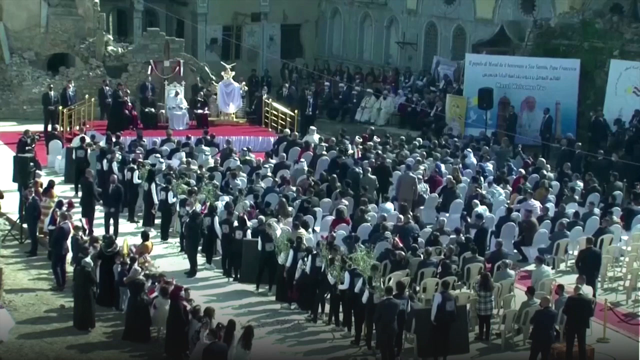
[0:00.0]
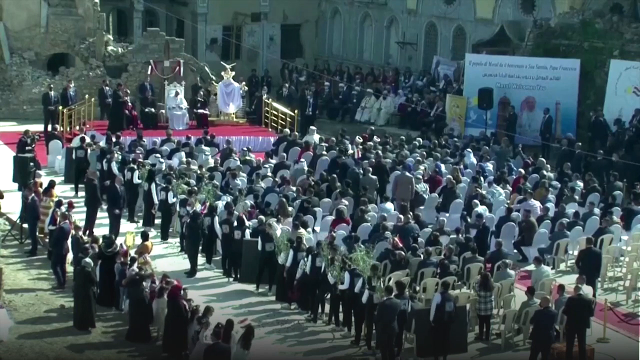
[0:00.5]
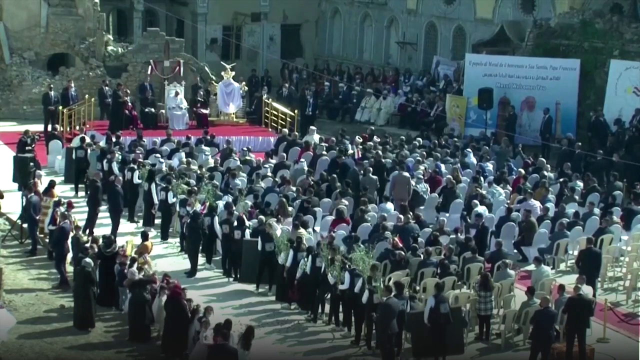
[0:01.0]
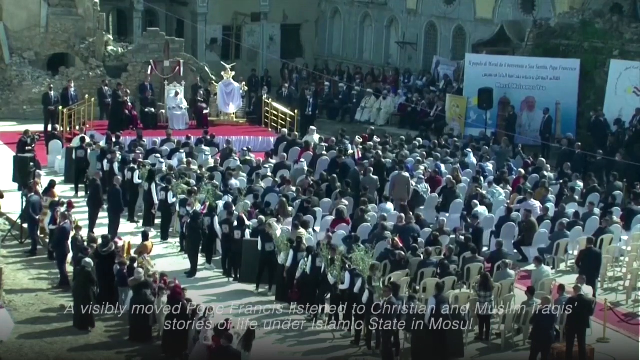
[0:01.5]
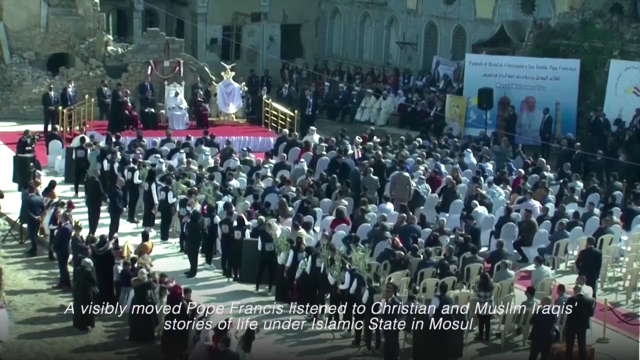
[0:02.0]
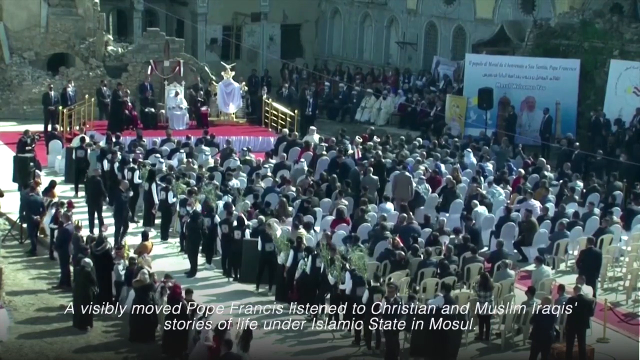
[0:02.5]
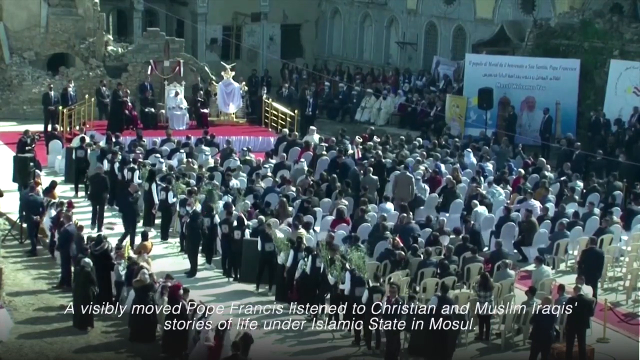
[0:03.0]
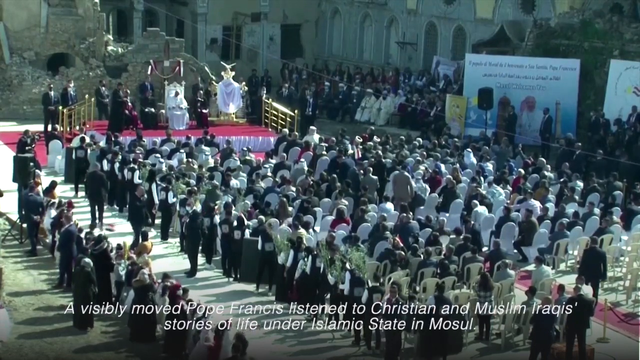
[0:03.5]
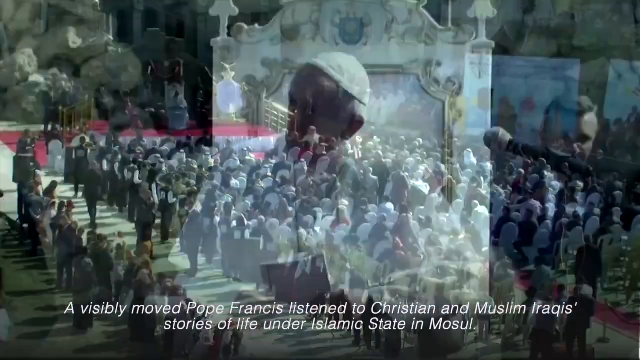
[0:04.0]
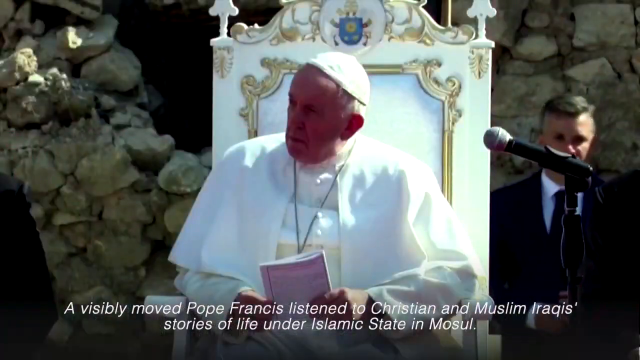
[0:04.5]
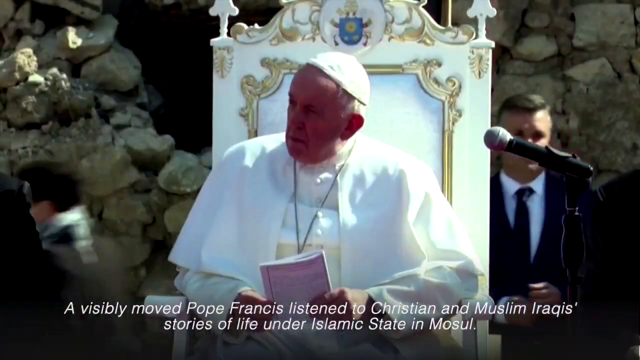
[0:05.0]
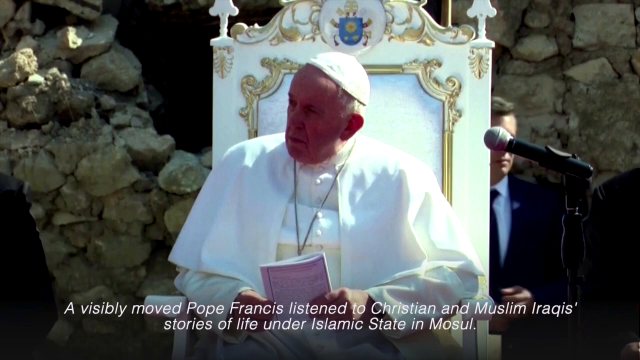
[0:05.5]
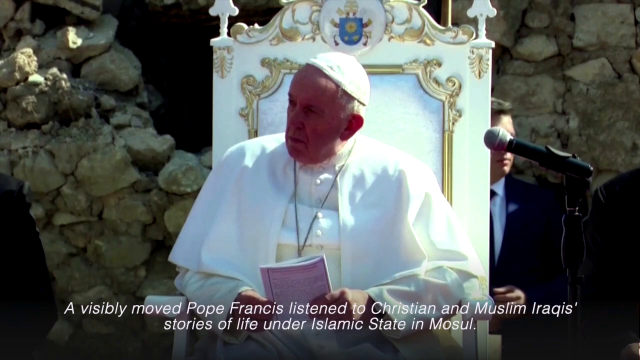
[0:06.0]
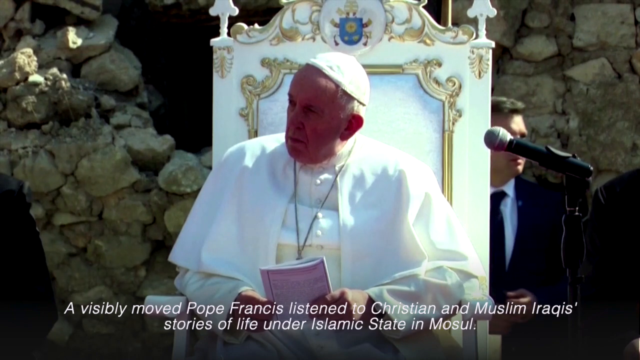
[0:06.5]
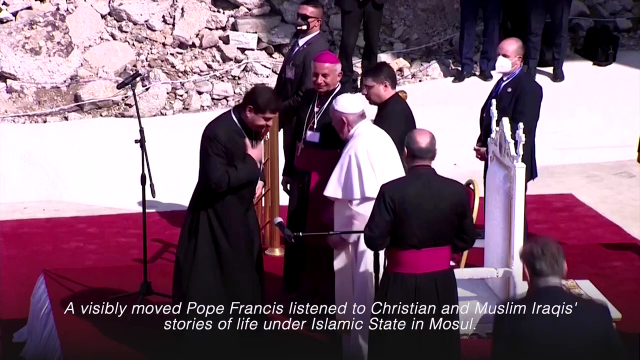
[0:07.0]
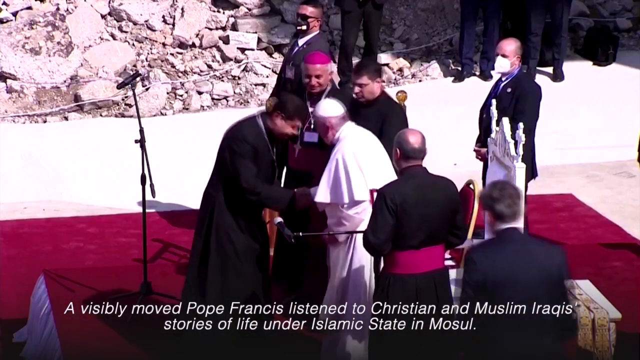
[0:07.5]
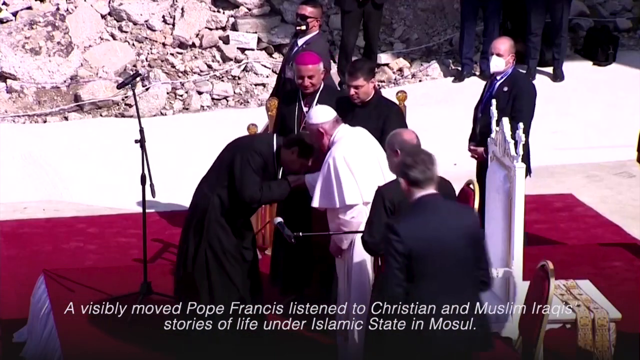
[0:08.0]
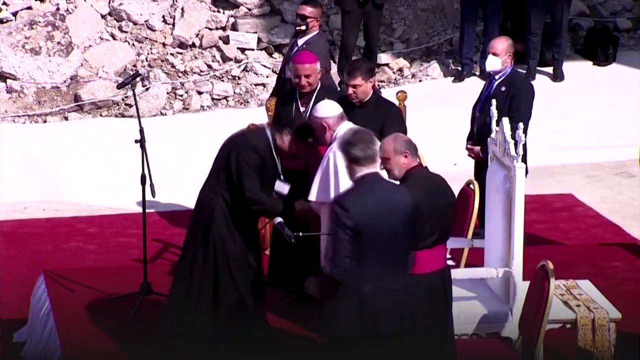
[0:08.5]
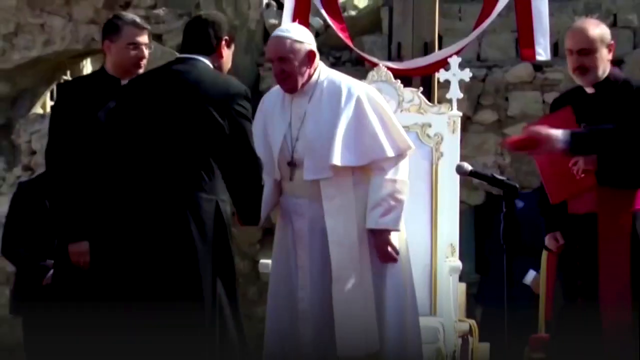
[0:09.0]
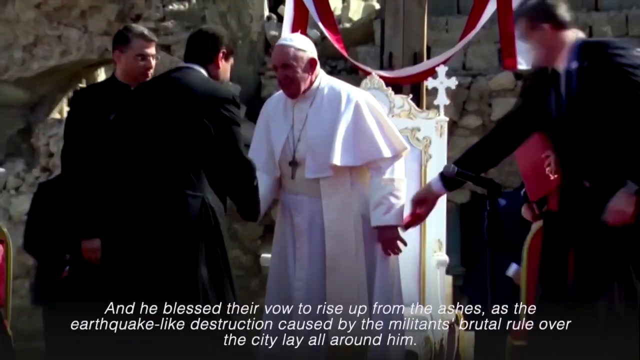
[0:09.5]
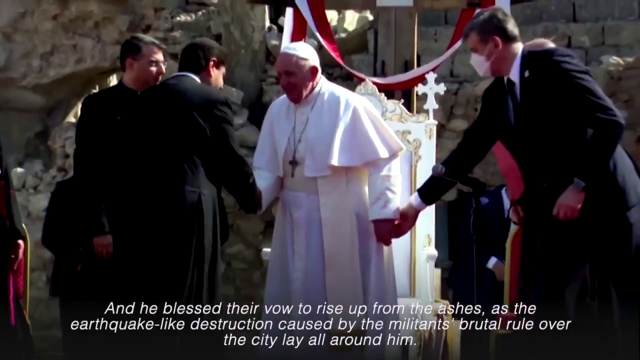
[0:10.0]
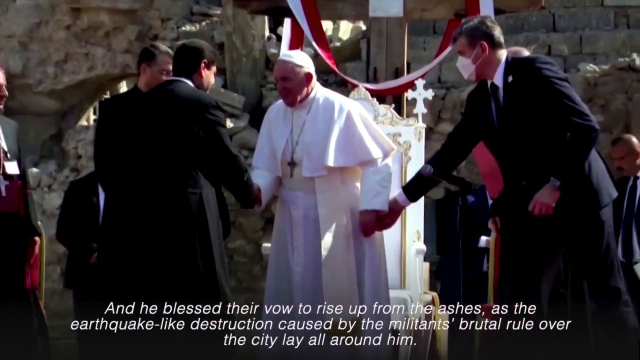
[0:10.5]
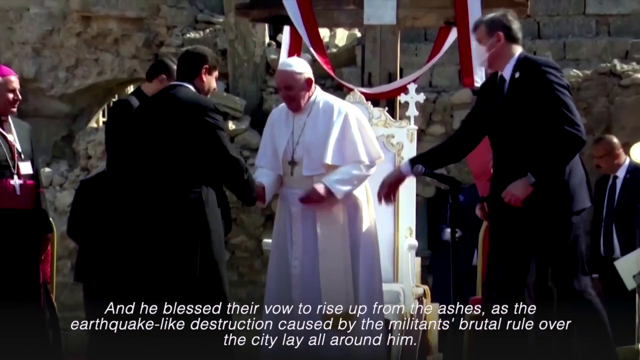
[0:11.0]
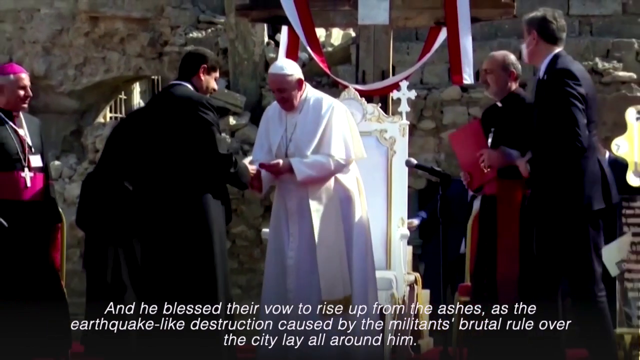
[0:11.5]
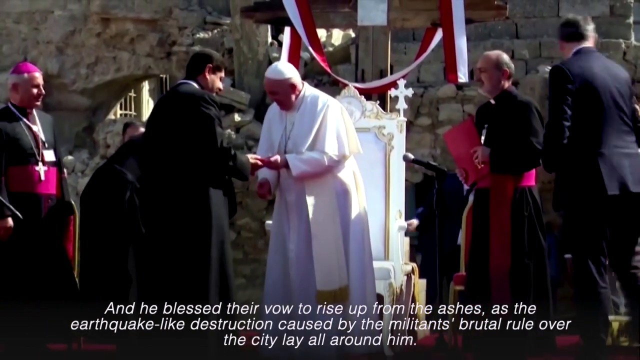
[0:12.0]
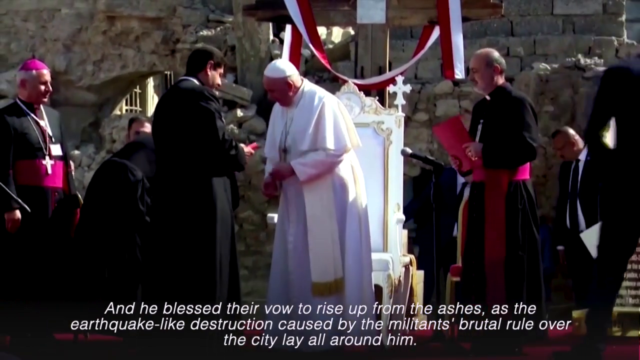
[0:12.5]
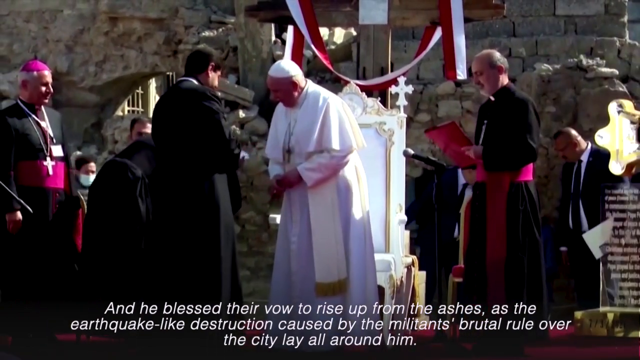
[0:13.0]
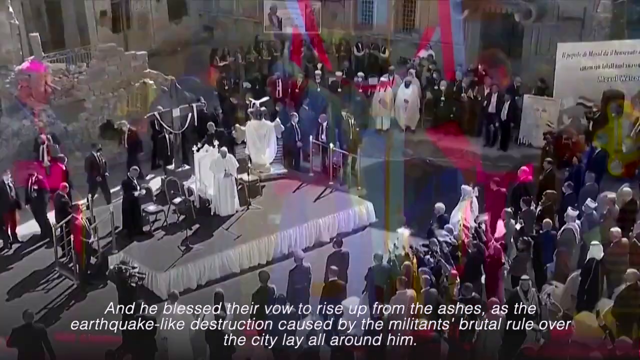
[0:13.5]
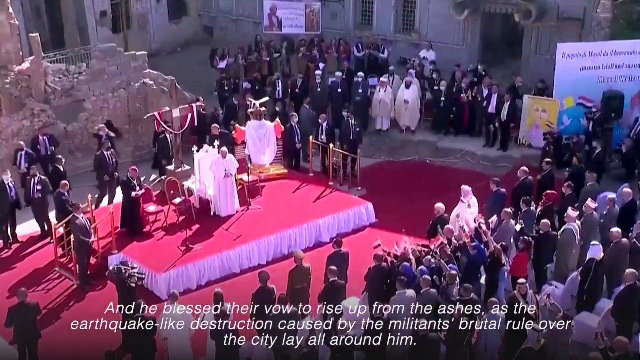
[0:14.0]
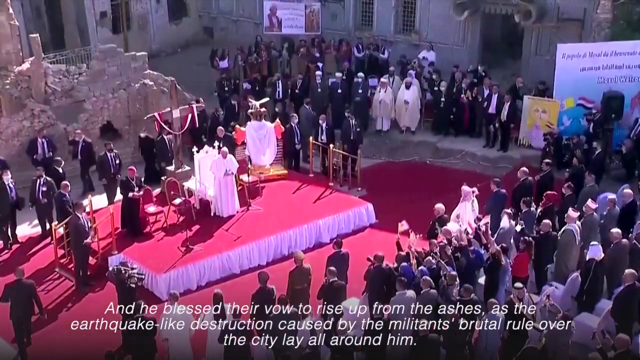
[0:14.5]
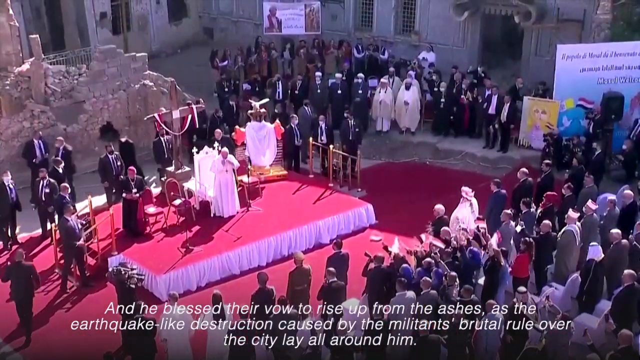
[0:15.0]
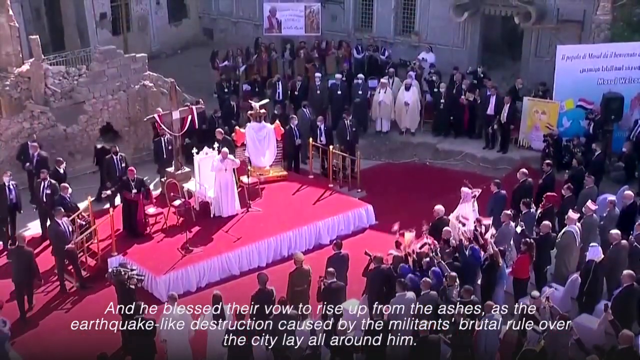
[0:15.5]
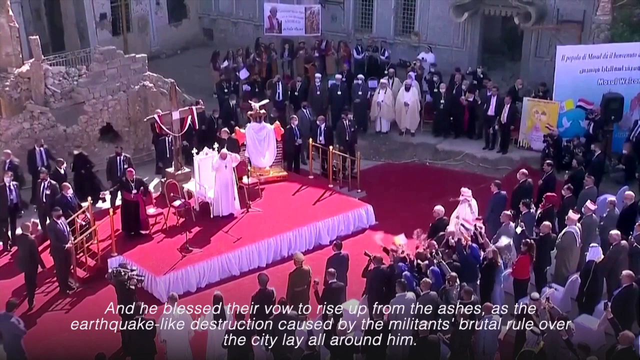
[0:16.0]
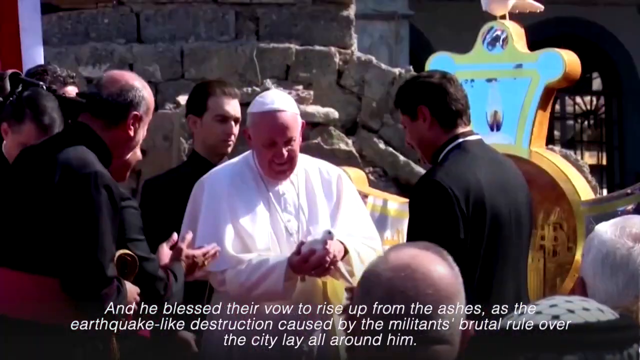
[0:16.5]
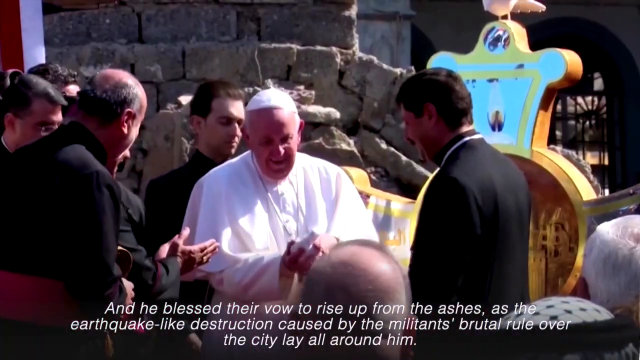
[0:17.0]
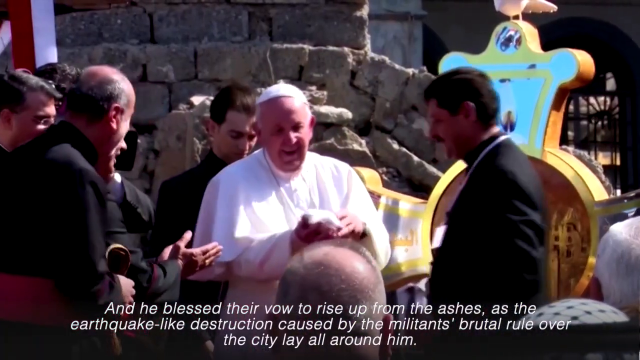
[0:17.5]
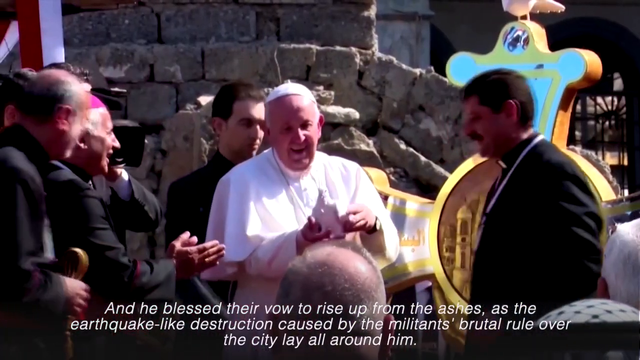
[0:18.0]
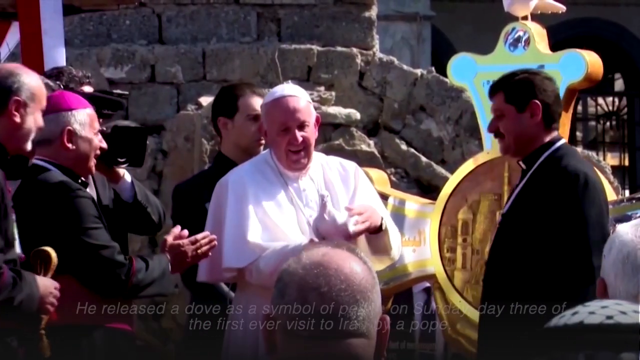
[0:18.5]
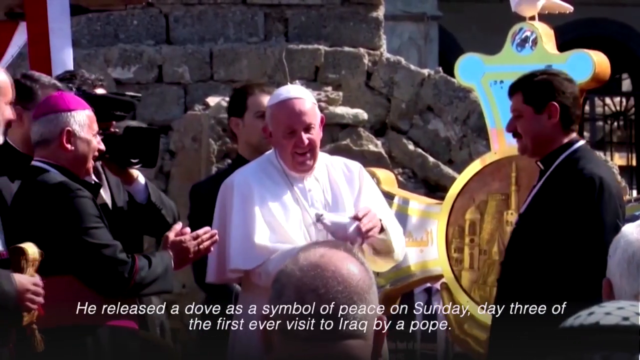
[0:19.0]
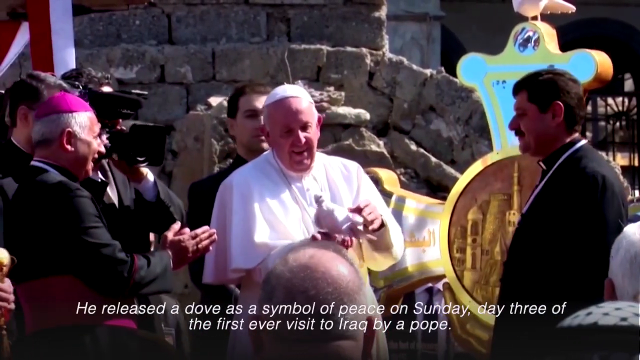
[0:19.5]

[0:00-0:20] A large group of people is gathered in what looks like a street of some kind, a relatively small area, probably a street, crammed with hundreds if not thousands of people. Pope Francis, wearing an all-white outfit with a little white hat, is up on a kind of stage that has red carpet and golden staircases leading up to it. Everyone in the audience looks to be facing the stage or podium, and there are also people seated to the sides of the stage. Pope Francis is initially sitting on a kind of throne that is white and gold, and as time goes on he greets various people who are mostly dressed in black; some of them might be members of the church. He ends up holding a white dove in his hand.